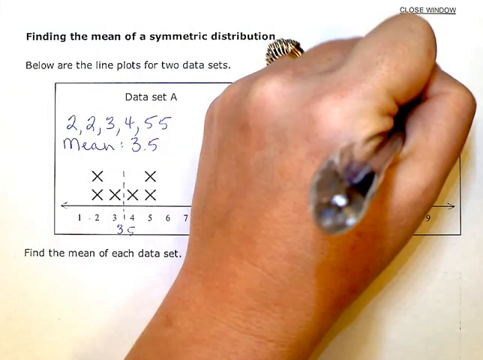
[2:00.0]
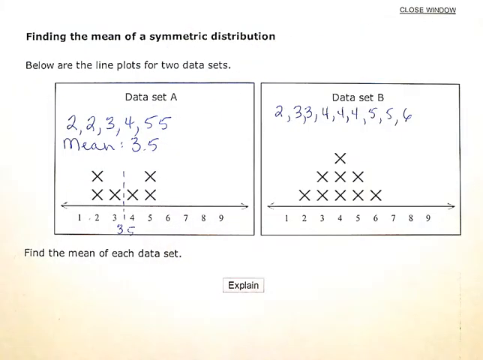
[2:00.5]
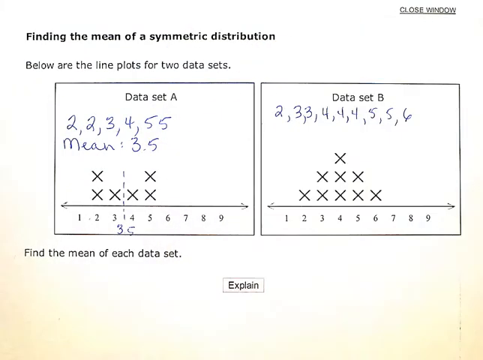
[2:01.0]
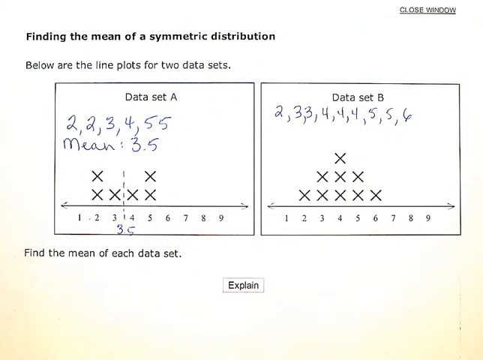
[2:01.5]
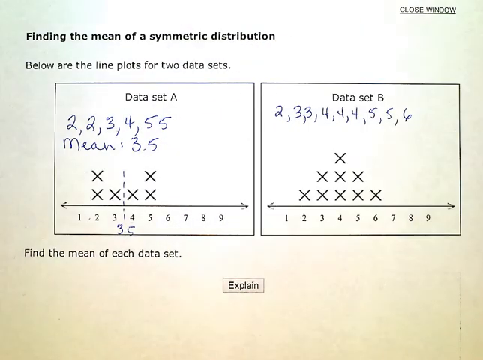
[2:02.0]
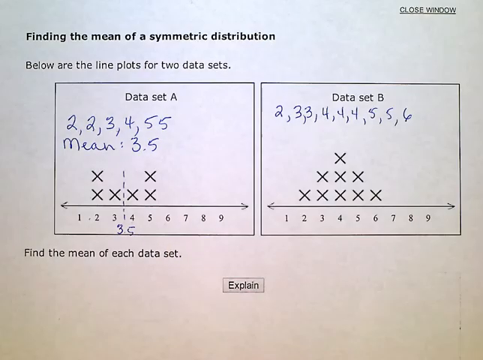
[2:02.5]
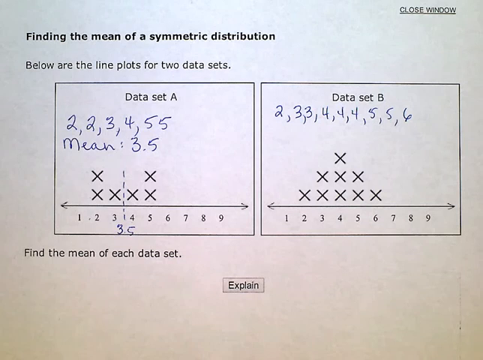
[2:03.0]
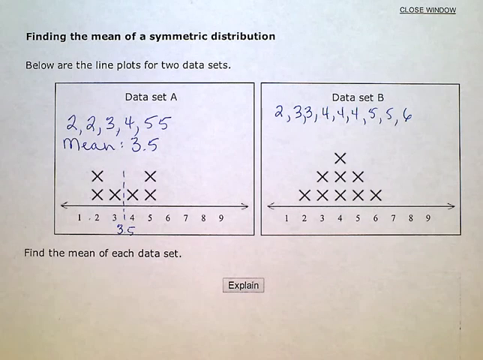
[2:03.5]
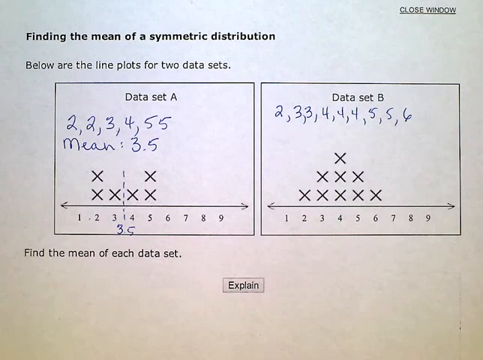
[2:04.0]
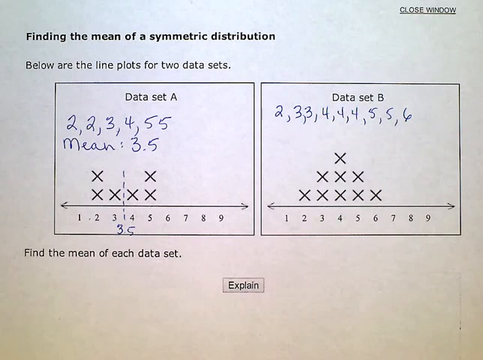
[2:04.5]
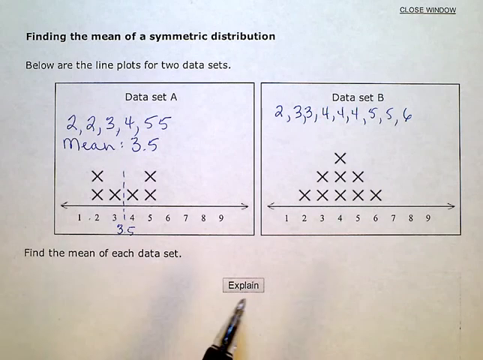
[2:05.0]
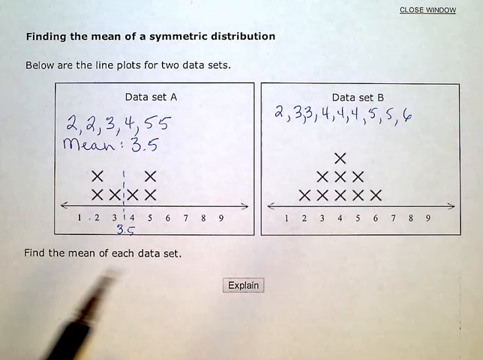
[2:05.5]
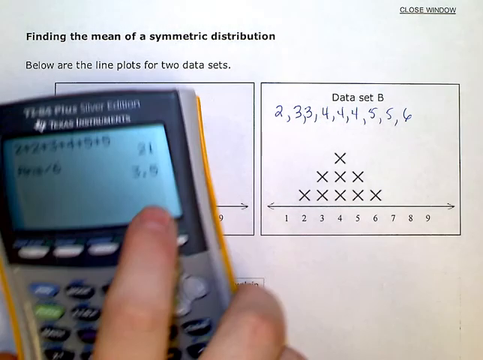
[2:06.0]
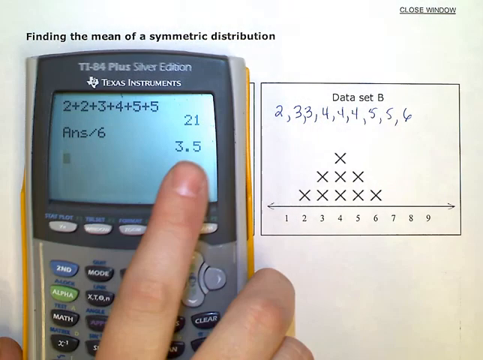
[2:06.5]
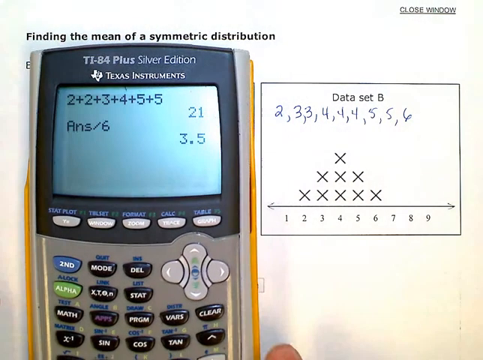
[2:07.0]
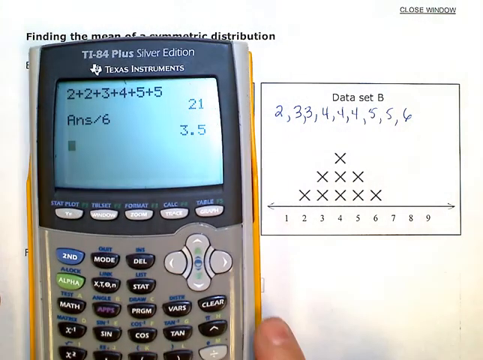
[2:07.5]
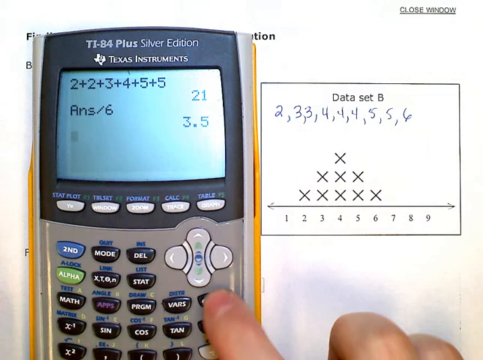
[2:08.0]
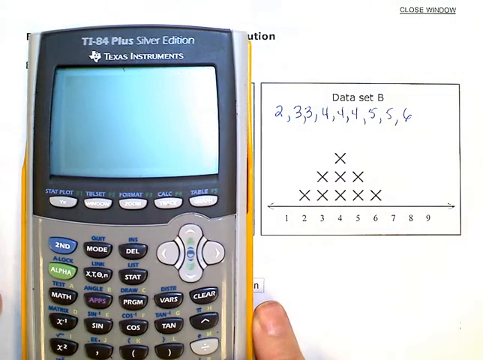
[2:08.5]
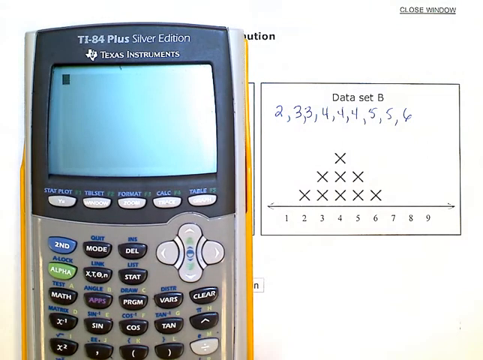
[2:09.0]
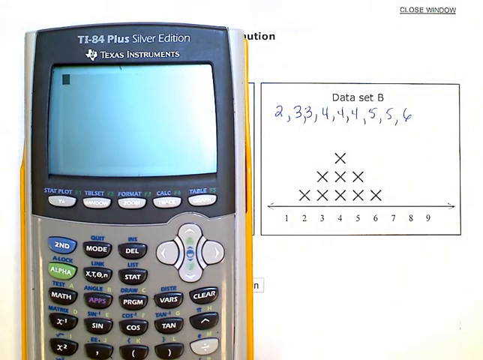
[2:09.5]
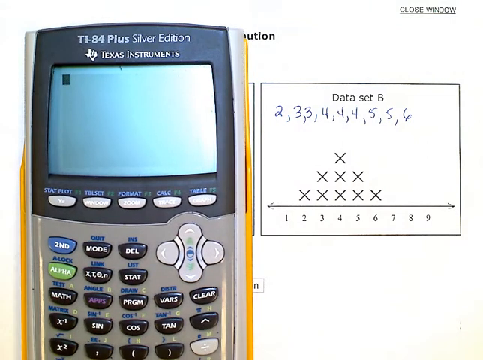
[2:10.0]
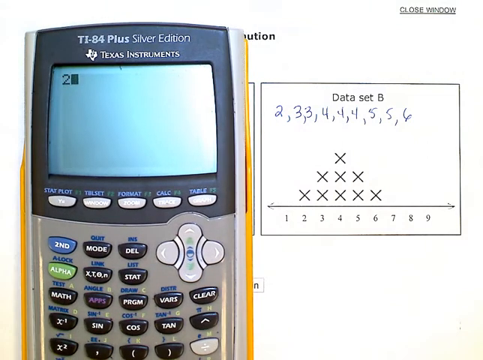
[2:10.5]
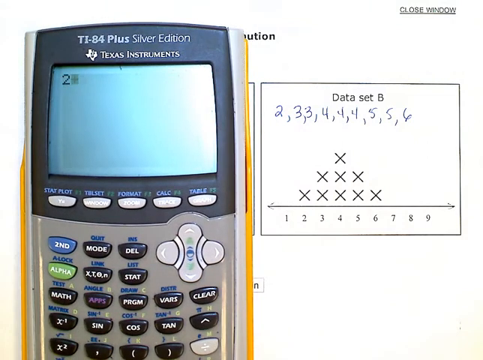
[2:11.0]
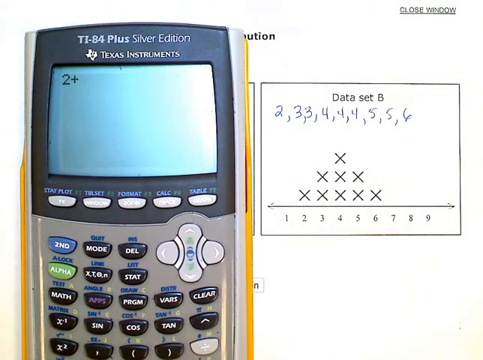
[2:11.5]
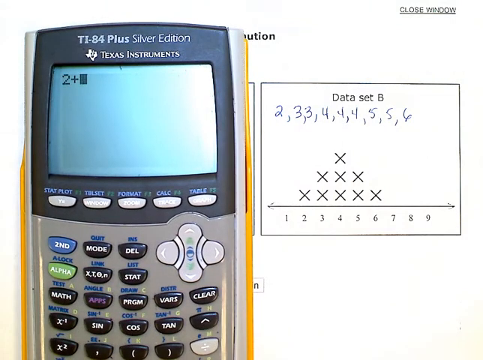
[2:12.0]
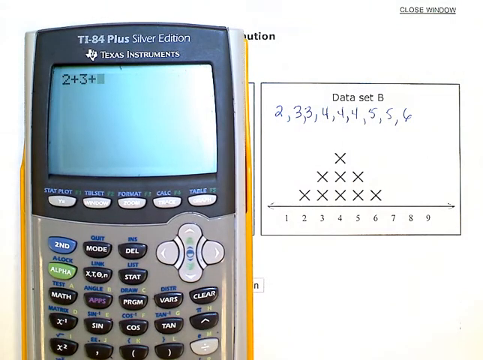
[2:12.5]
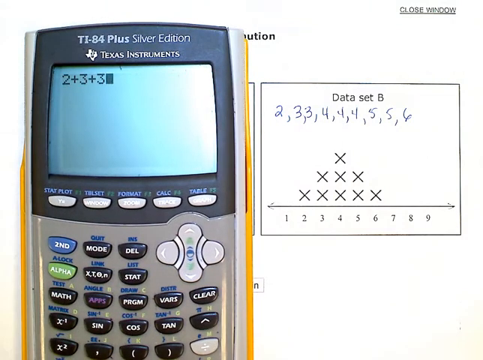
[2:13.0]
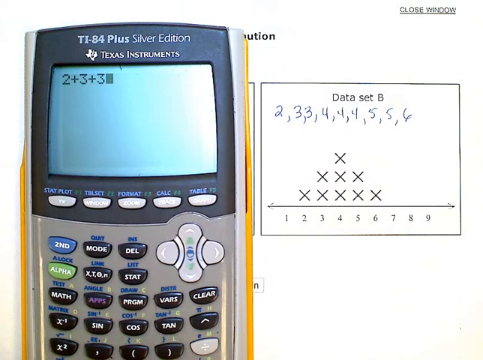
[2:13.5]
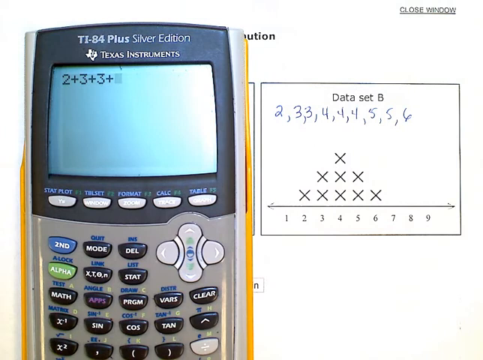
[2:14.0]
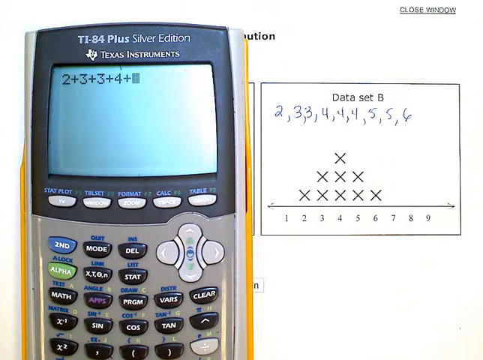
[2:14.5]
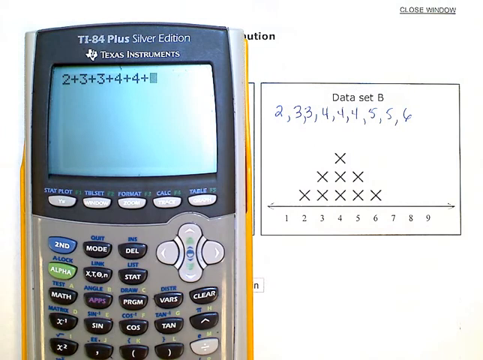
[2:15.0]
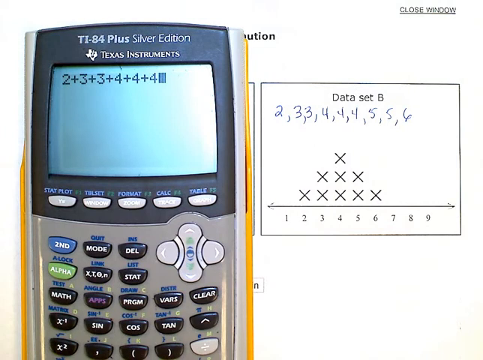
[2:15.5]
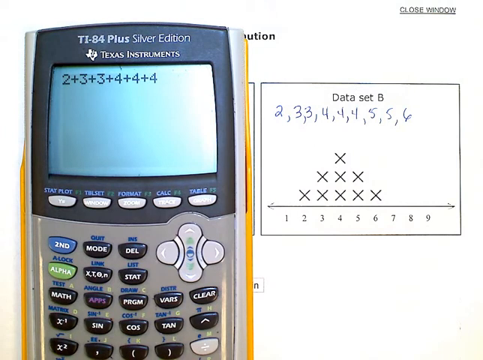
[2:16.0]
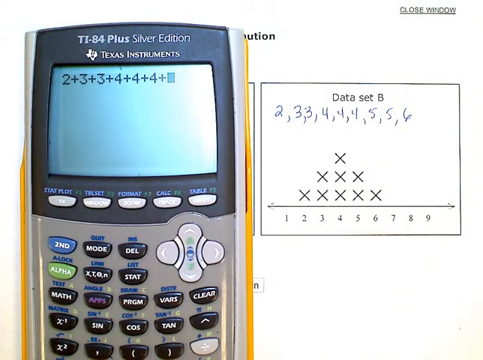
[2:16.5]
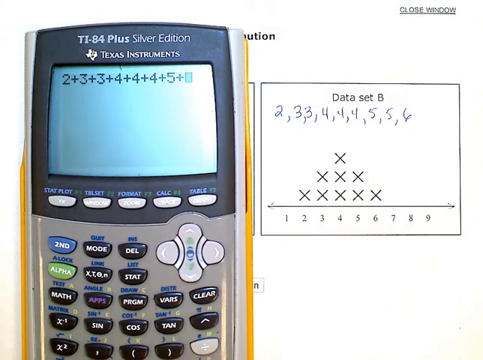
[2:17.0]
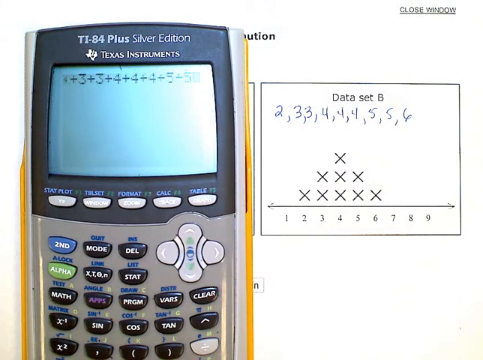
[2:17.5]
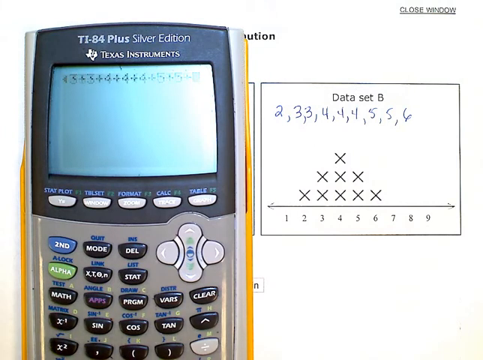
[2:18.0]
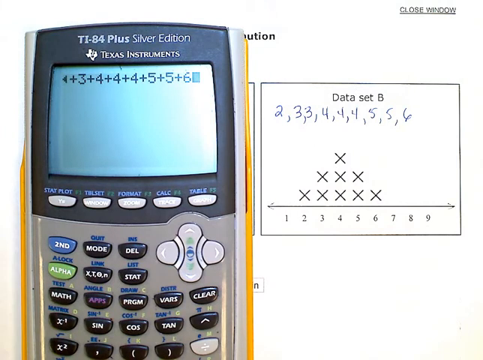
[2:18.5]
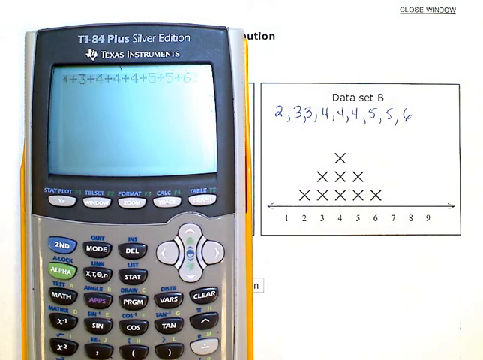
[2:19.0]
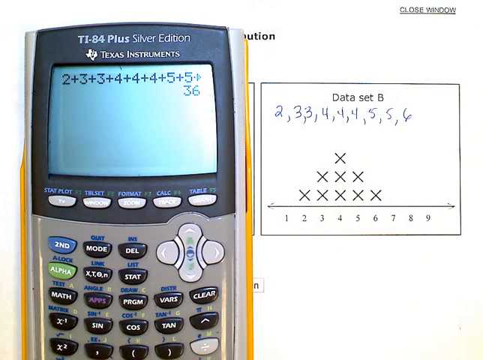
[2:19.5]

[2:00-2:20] She wears a gold ring on her left ring finger, a thicker band with ridges on the side and little diamonds on top of the ridges. She pulls her hand away, then adds one more number, 6, so the list reads from left to right 2, 3, 3, 4, 4, 4, 5, 5, 6. She places the calculator over this data, presses the Clear button, and starts adding: 2 + 3 + 3, continuing through all the numbers. She presses Enter and the result is 36. The typed expression does not continue to the next line; it ends with a plus and the 6 is cut off. The 36 is flush right, underneath where it says "5 +", at the top and not centered, in black on the square digital screen.